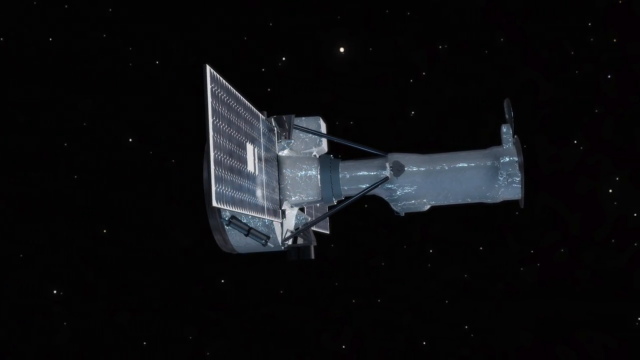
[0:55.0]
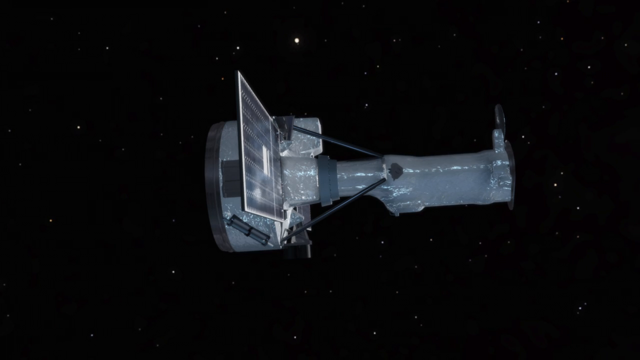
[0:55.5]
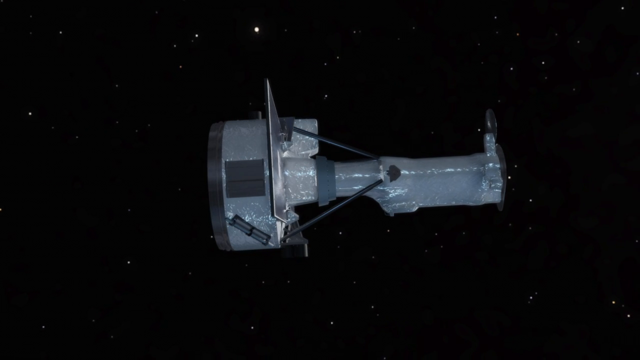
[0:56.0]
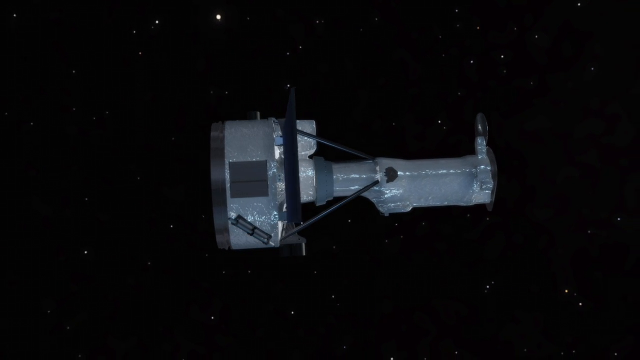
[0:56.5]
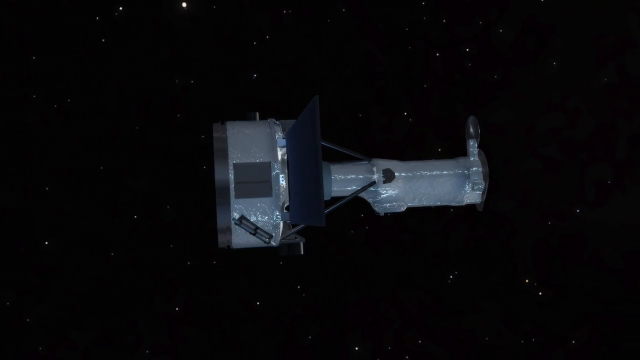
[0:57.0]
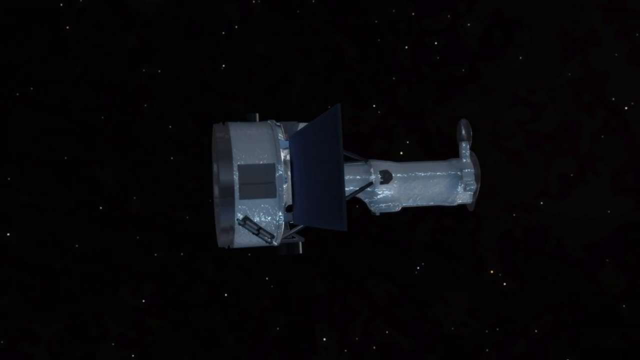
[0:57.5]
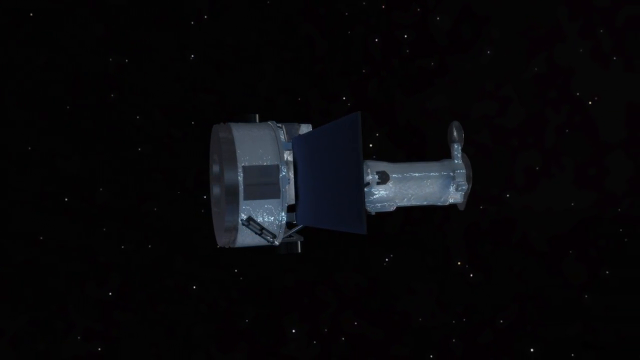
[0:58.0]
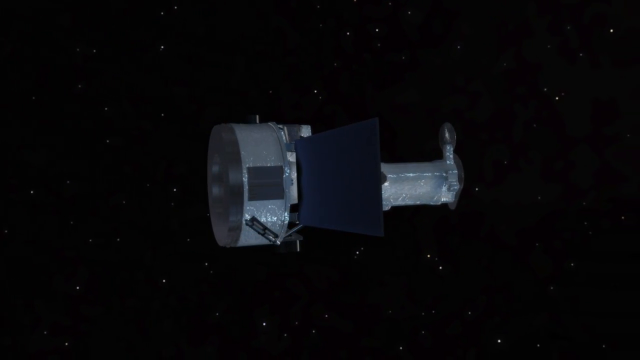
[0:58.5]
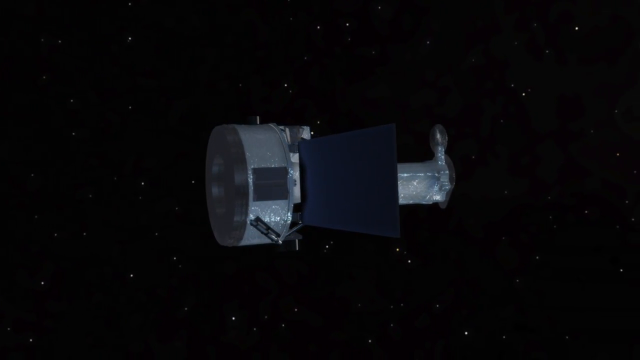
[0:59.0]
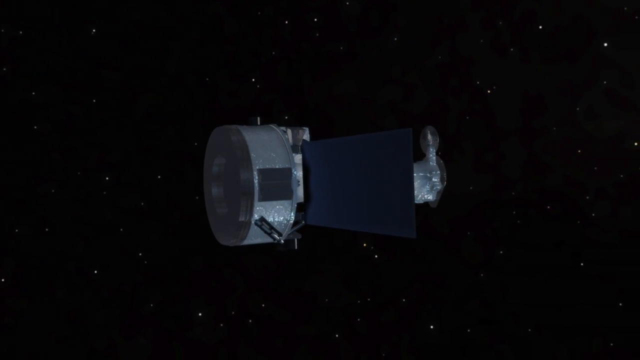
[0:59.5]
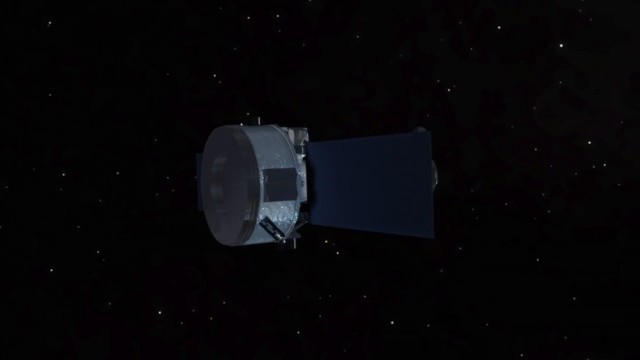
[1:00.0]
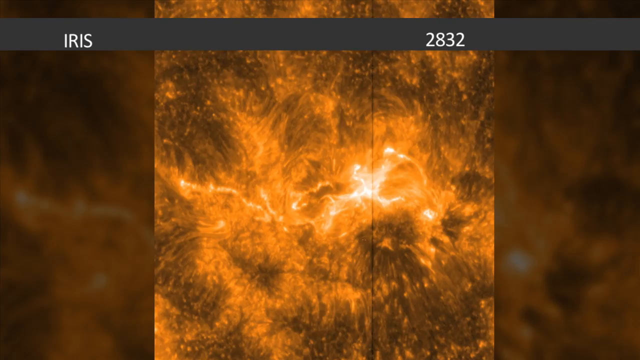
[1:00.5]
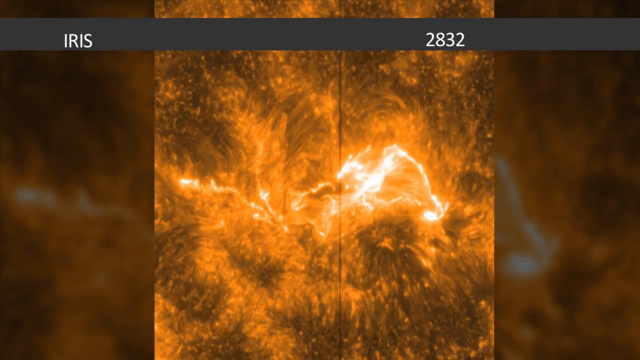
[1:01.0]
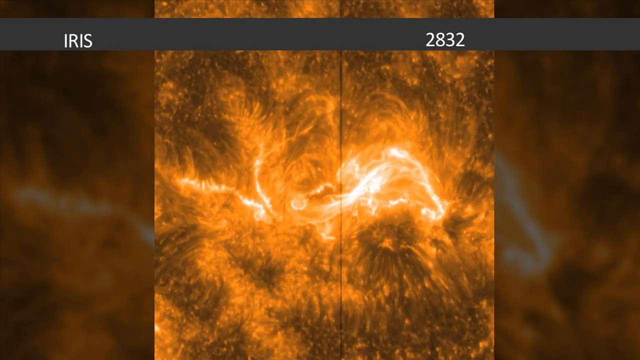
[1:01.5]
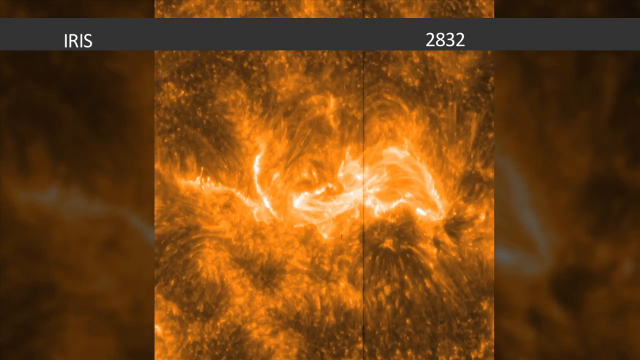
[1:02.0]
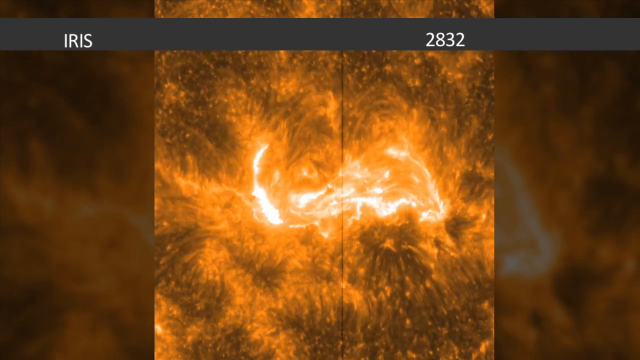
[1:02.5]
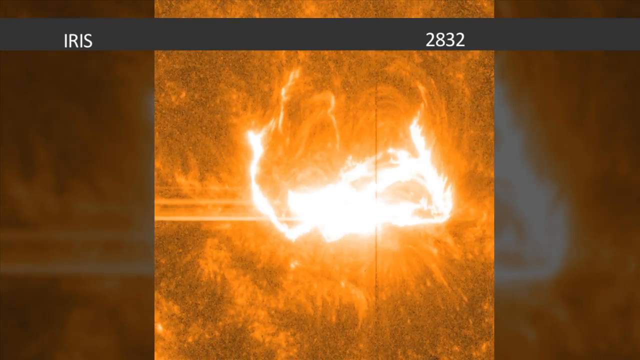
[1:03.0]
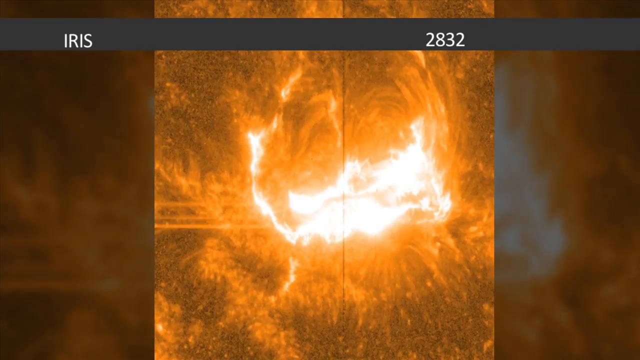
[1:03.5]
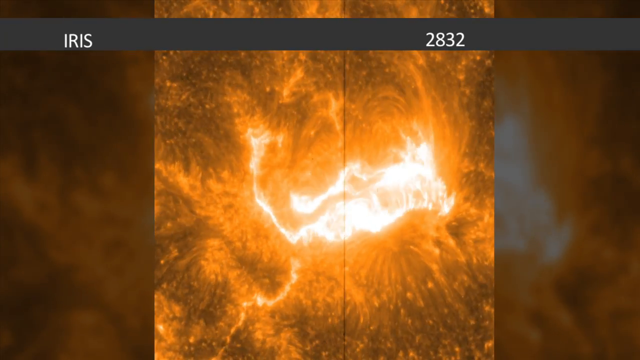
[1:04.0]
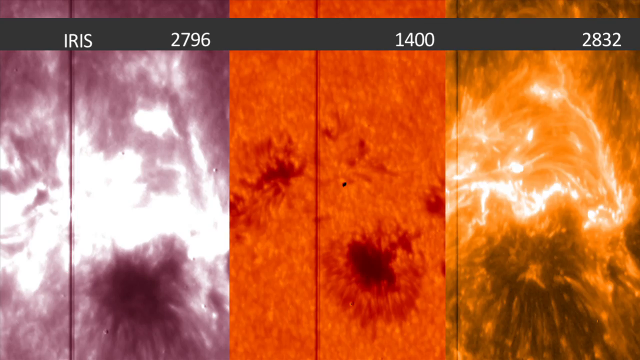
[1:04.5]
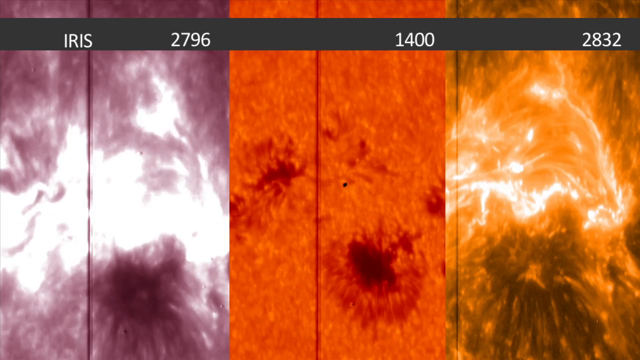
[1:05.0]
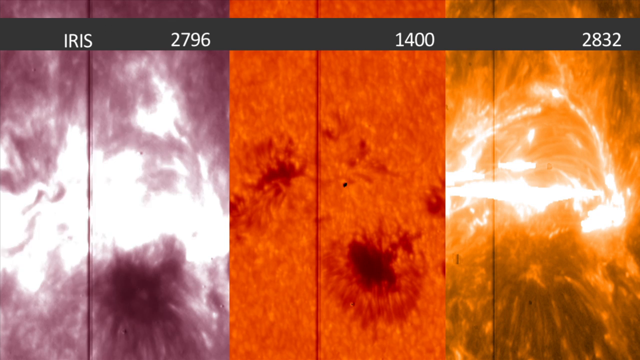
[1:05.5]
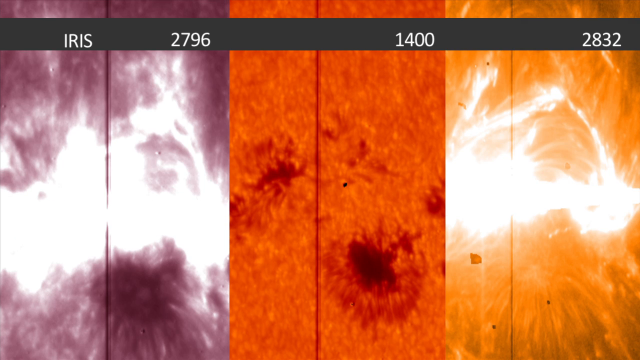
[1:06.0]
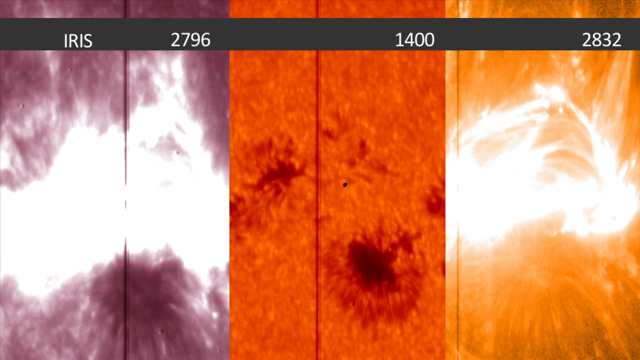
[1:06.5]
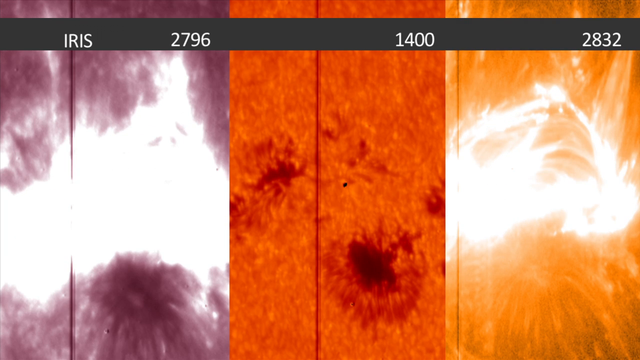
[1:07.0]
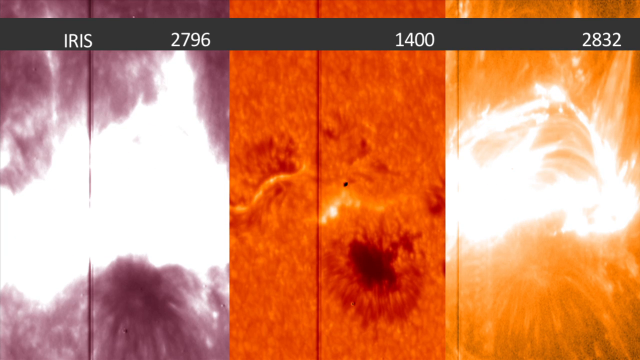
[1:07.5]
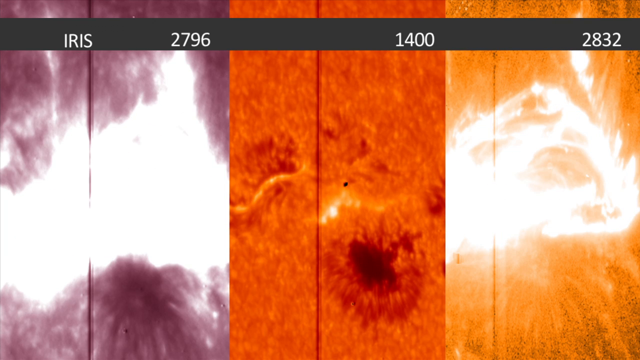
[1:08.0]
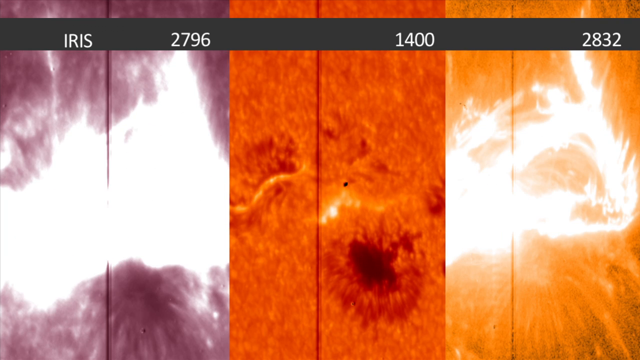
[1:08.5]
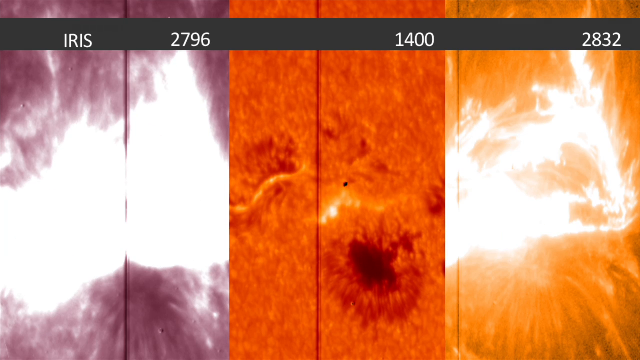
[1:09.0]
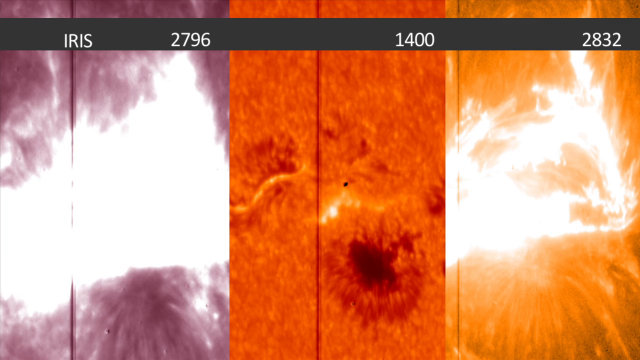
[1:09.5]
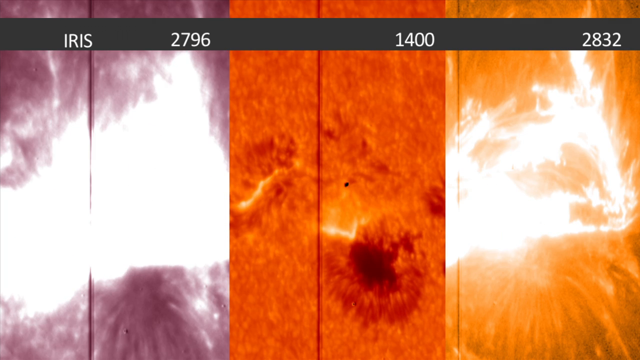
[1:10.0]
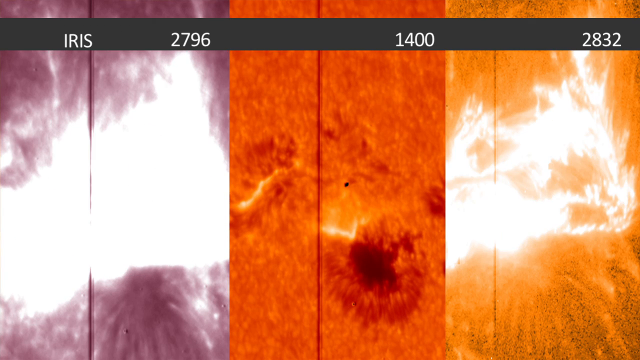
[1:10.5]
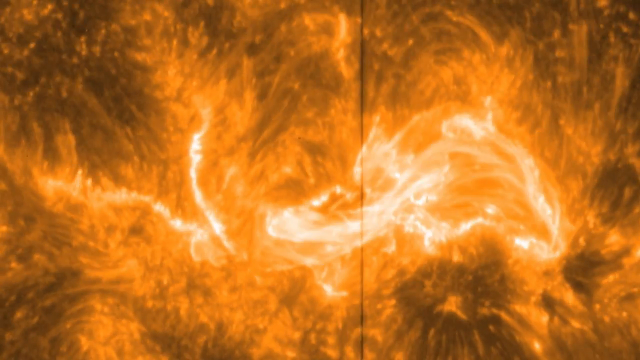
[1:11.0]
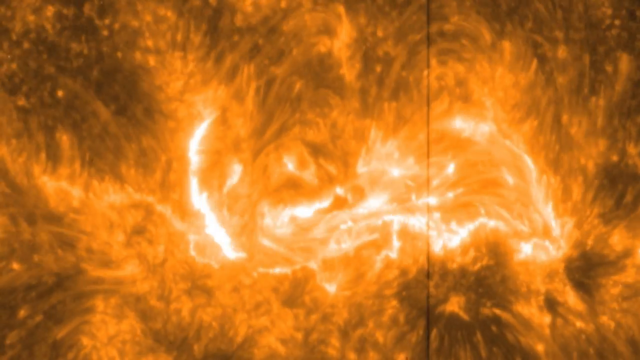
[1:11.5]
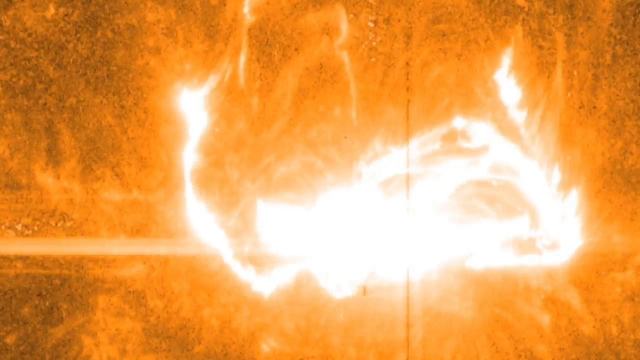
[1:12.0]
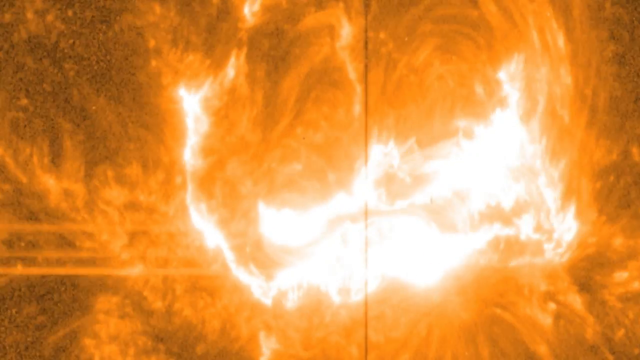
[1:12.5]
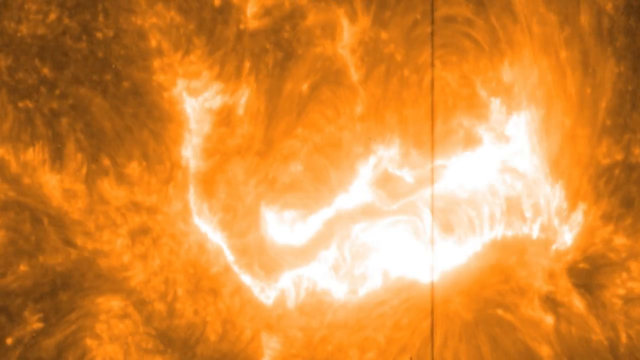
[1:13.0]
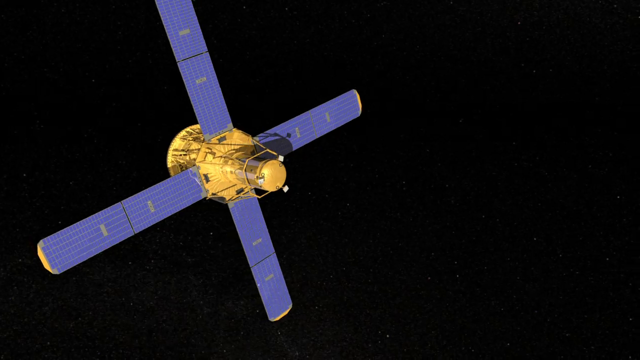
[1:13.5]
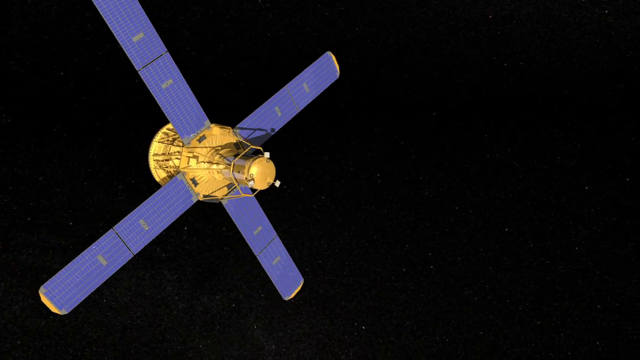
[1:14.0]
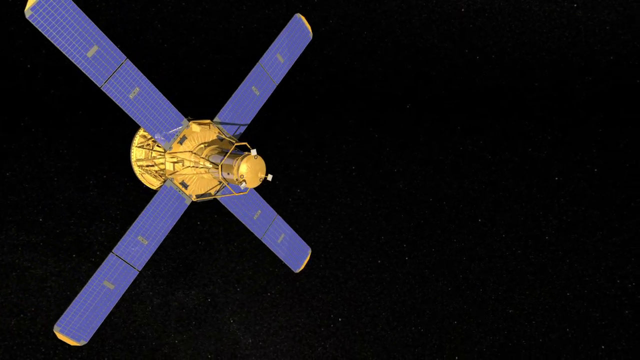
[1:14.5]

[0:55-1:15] A computer-generated satellite is in space, slowly rotating; it looks like it is floating towards something. The sky behind it is completely black with white stars scattered around. The satellite is gray and has a bright silver solar panel on the side. Then a close-up of the Sun shows a solar flare: the Sun is dark orange with darker patches and a bright white flare-up. A shot of three solar flares at once follows. The first looks purple and has a white flare that bursts in the middle. The second is dark orange with dark orange patches and a small flicker of white. The third is orange with a bright white flicker. Then a full-size shot of a solar flare on the Sun takes up the entire screen; the Sun looks orange with dark orange patches, and a bright white flare bursts suddenly. Another computer-generated image shows another satellite with four very thin blue wings.